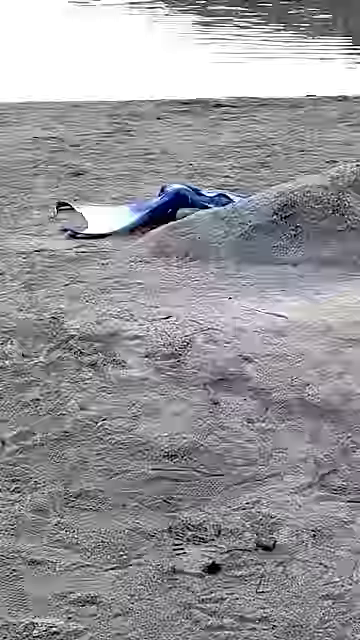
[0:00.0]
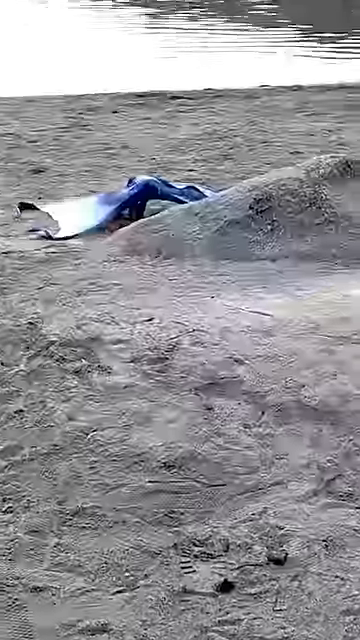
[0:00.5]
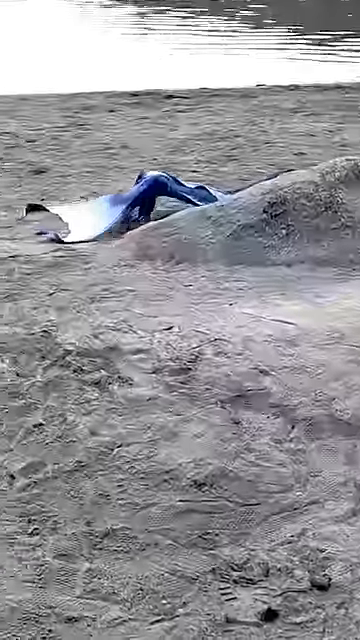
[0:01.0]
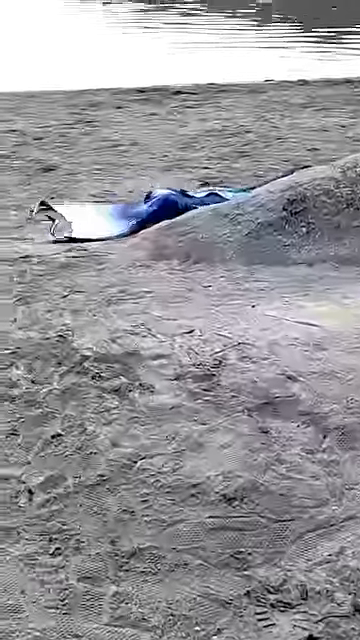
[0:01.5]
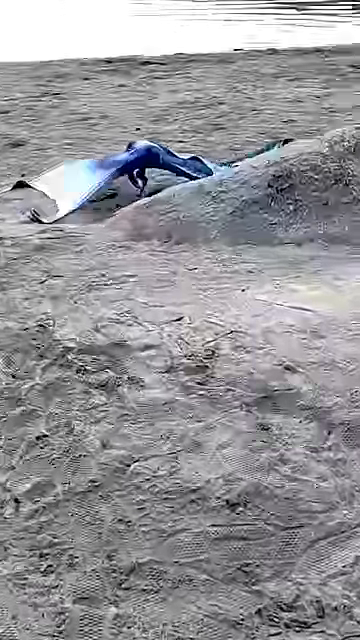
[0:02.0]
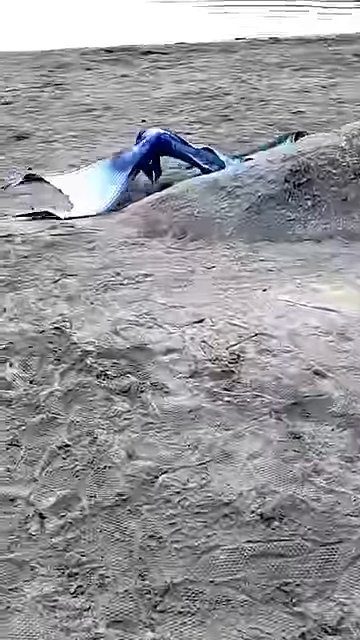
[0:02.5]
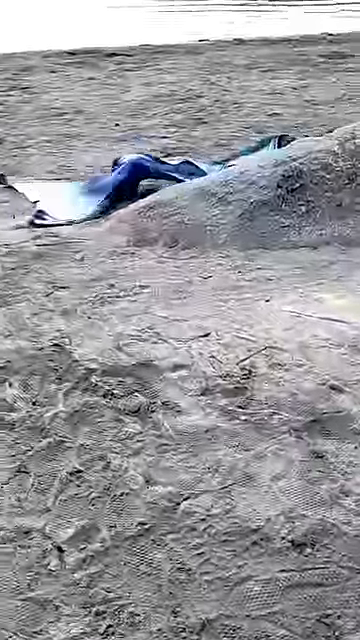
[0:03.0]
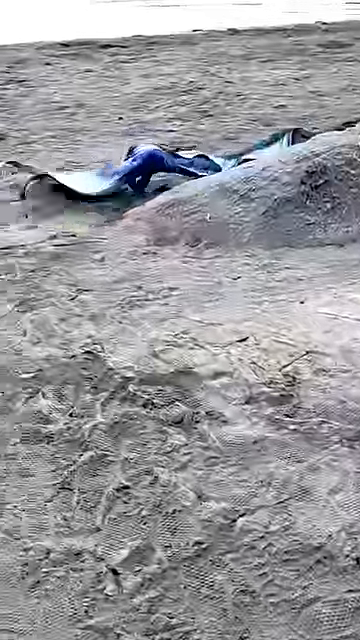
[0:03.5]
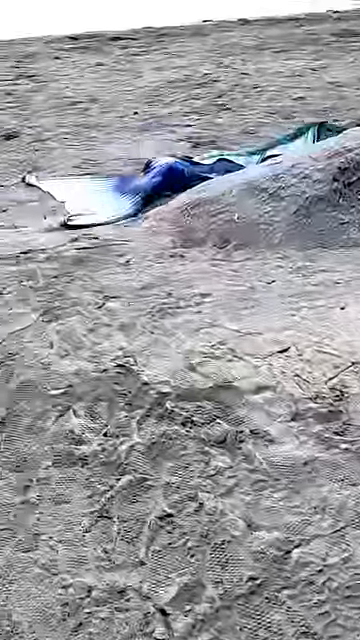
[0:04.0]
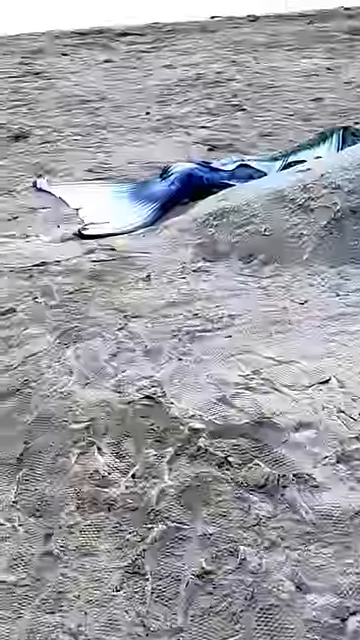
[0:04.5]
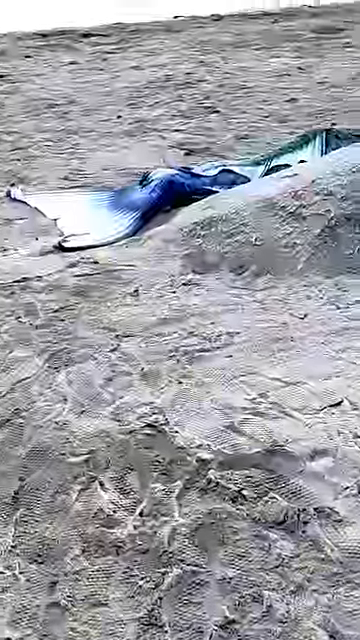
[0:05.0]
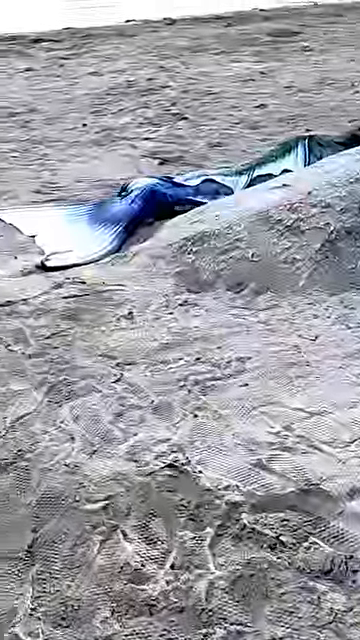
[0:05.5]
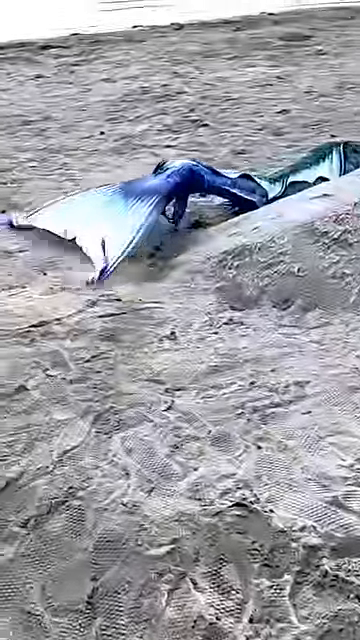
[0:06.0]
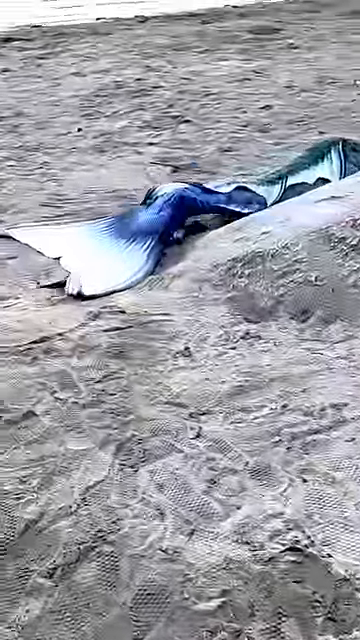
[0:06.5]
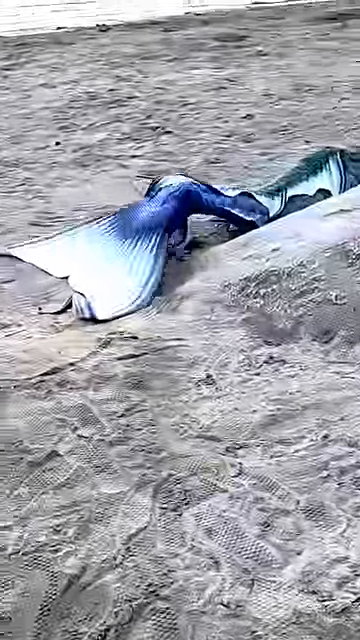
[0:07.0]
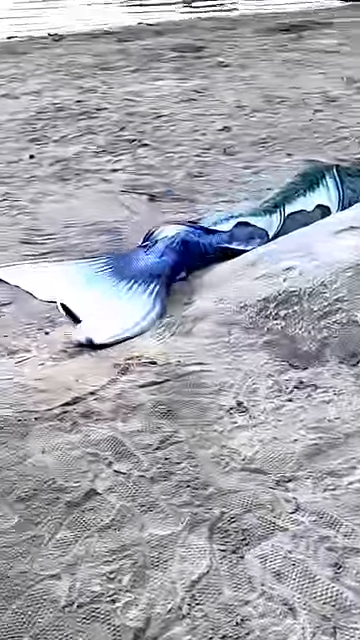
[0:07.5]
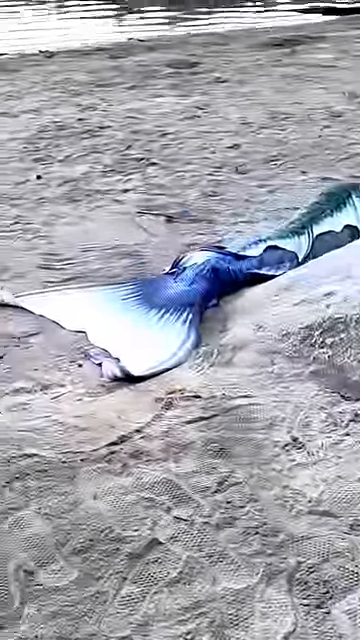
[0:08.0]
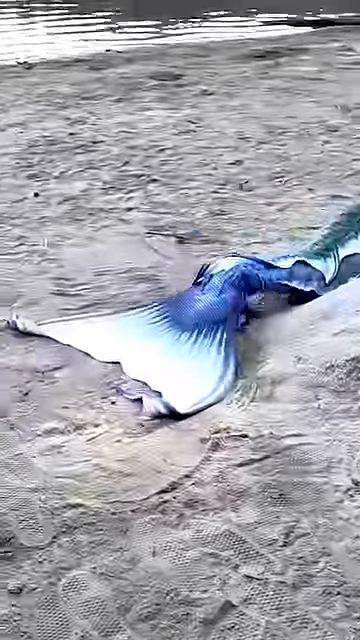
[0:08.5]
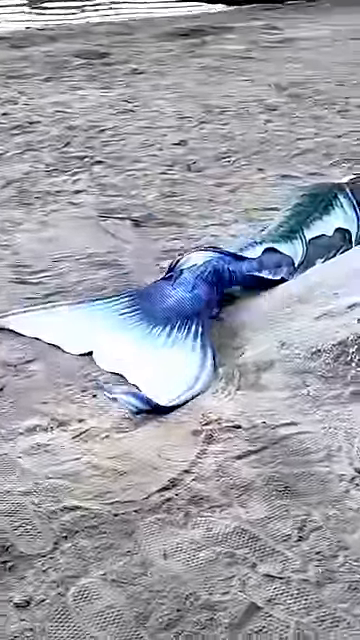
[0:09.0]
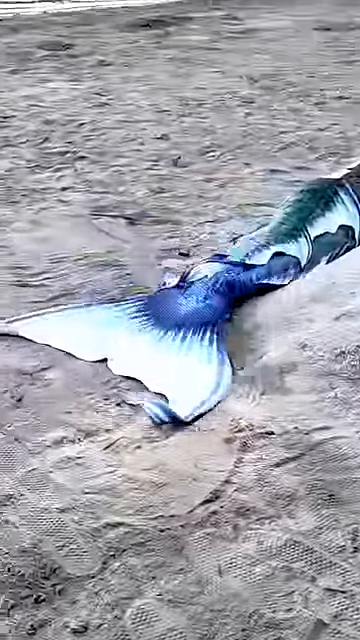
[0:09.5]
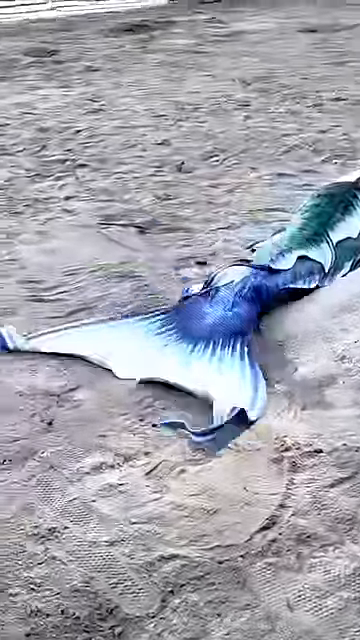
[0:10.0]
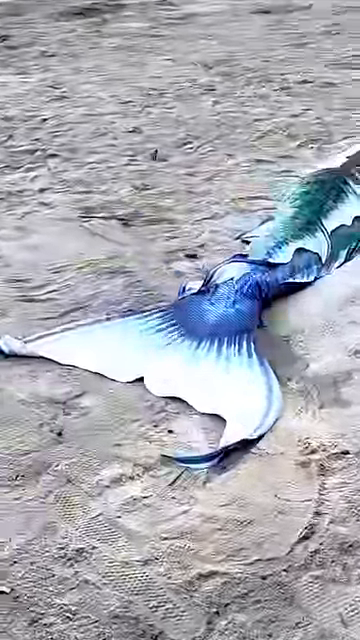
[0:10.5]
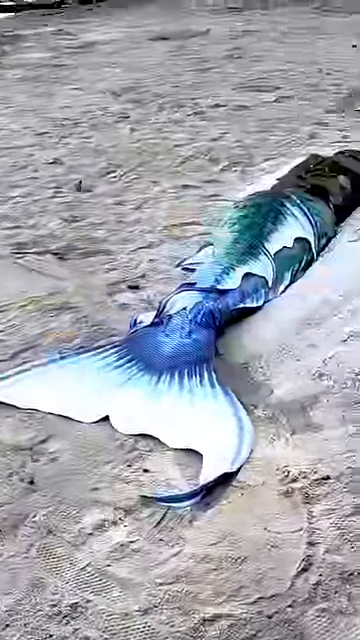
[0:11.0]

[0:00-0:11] Titled Real Mermaid Found at the Beach, the video shows a pile of sand on a beach with a mermaid tail lying behind it. The tail slowly rises up in the air and then falls back into the sand. The person holding the camera slowly walks toward the tail, and as they come around the edge of the little pile of sand, the top part of the mermaid appears not to be human but rather somebody covered up in what looks like a dark sheet. It seems to be a satire video: apparently someone has slipped a mermaid's tail onto the bottom part of their body, piled up some sand and sort of laid behind it, raising their feet into the air to make the tail look like it is slowly rising up and down on top of the sand and behind the hill while the person with the camera slowly walks toward them. Water is visible in the distance beyond the very sandy beach area, and it looks more like a lake than an ocean.